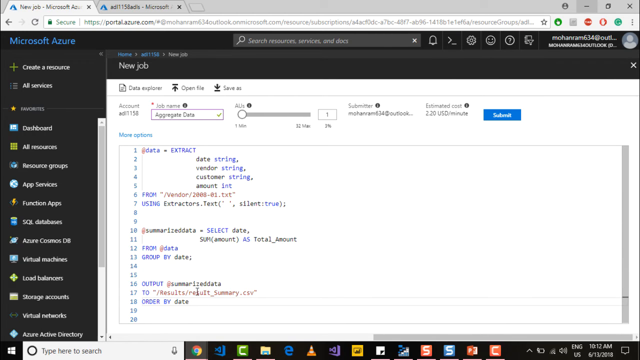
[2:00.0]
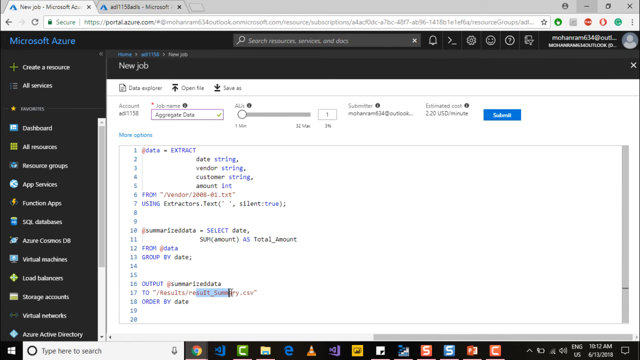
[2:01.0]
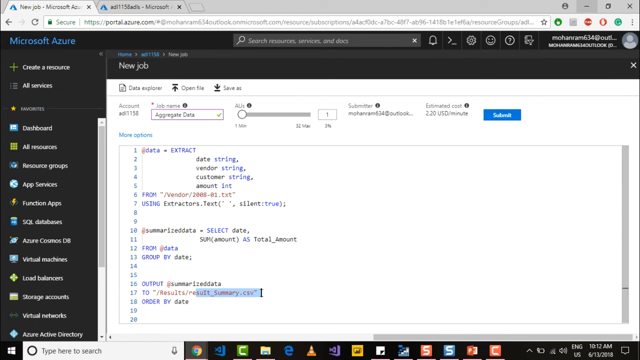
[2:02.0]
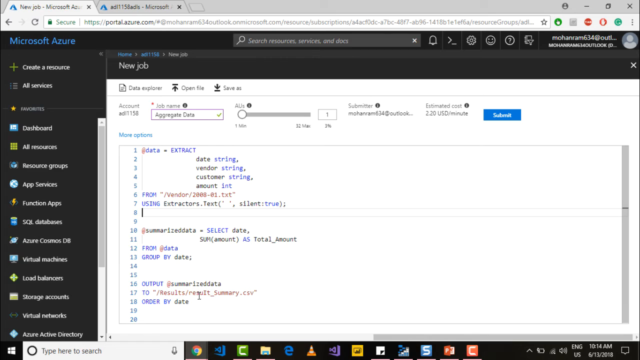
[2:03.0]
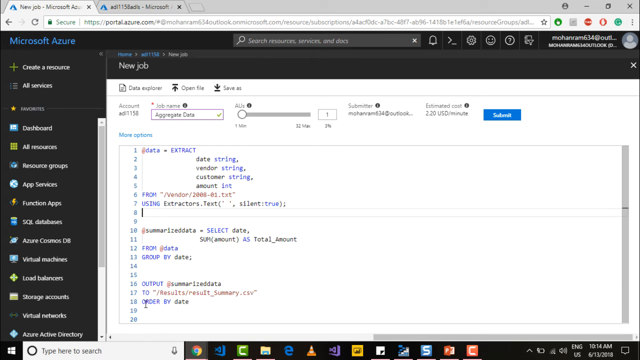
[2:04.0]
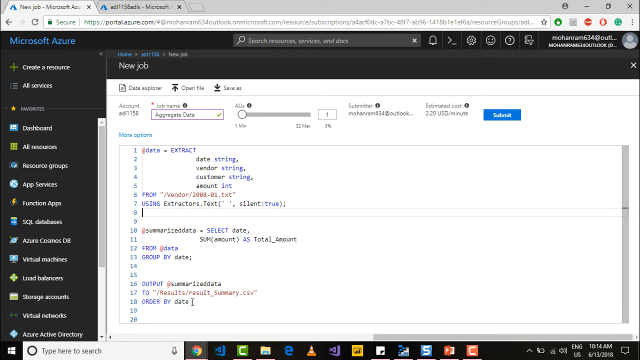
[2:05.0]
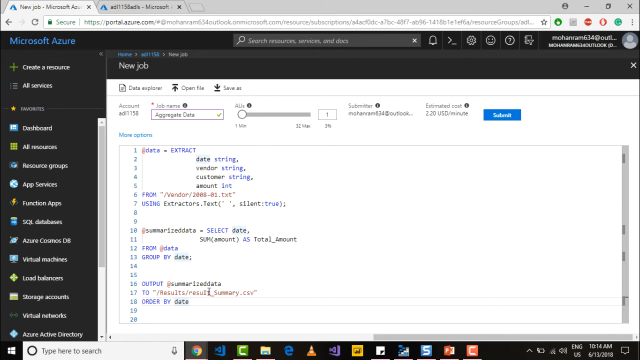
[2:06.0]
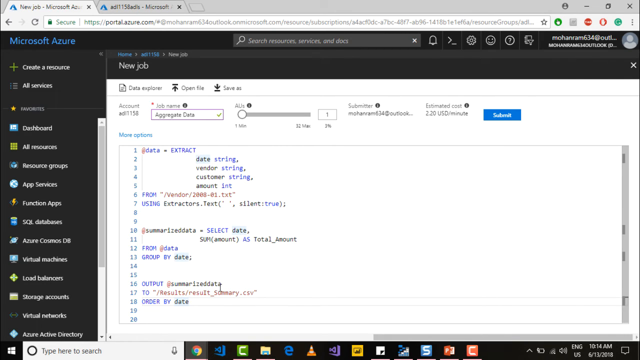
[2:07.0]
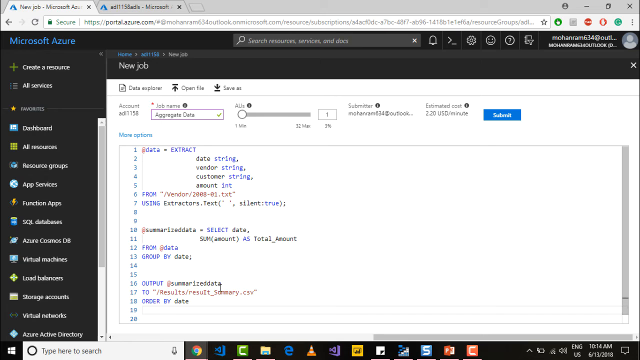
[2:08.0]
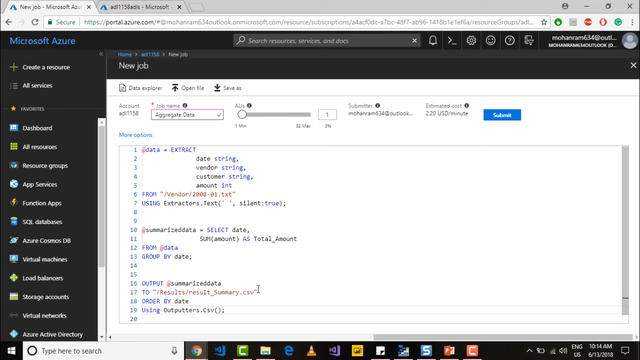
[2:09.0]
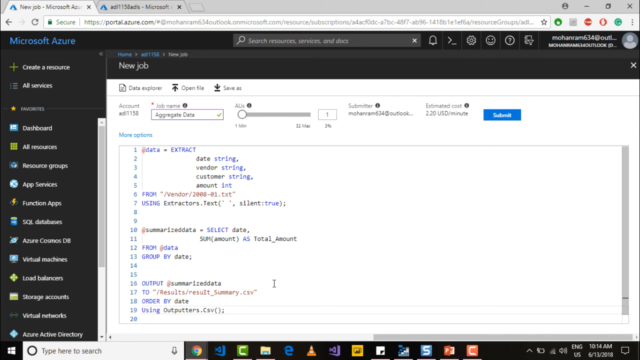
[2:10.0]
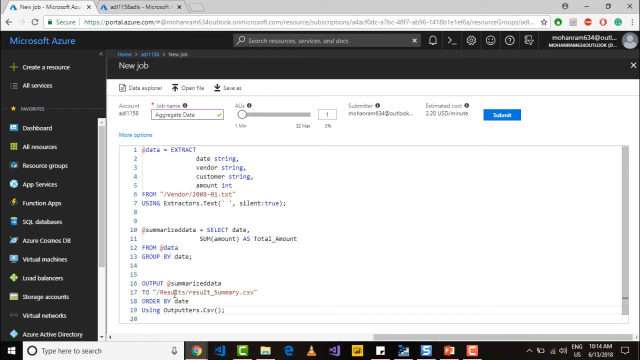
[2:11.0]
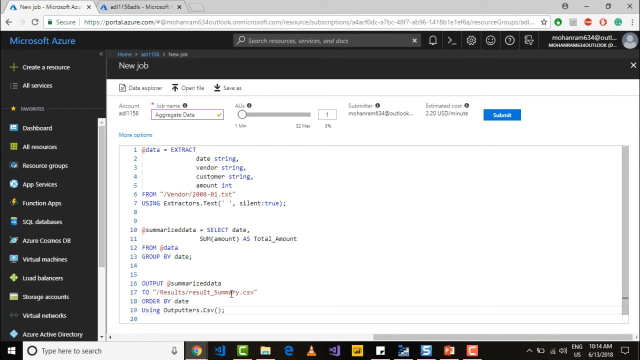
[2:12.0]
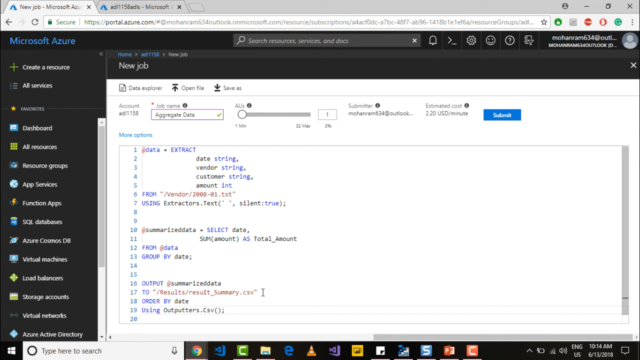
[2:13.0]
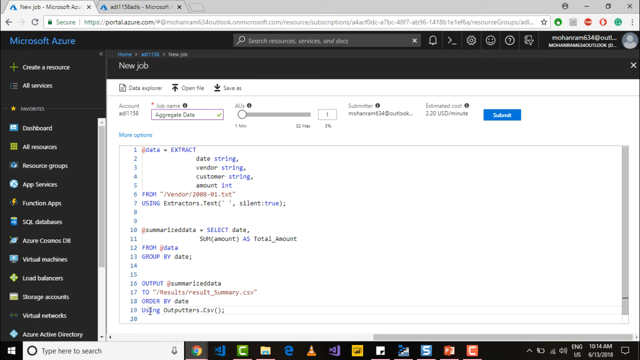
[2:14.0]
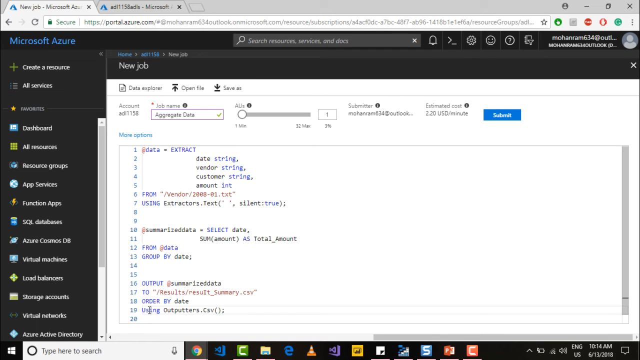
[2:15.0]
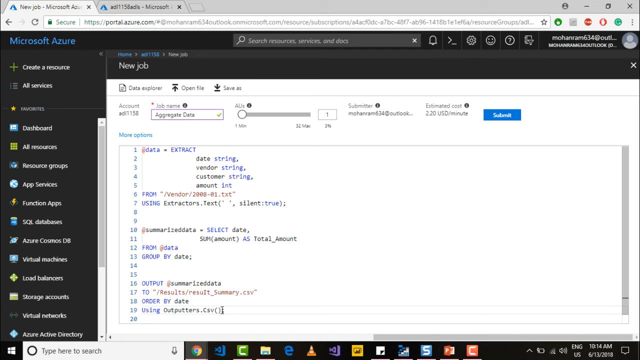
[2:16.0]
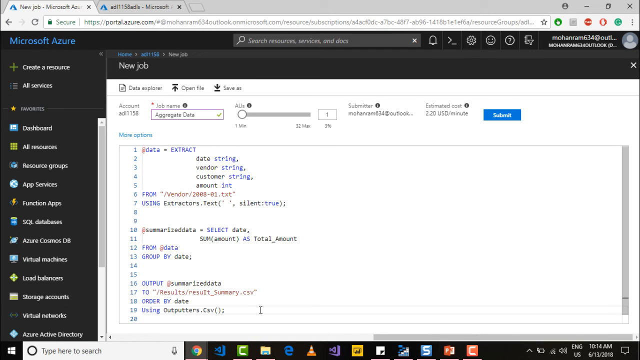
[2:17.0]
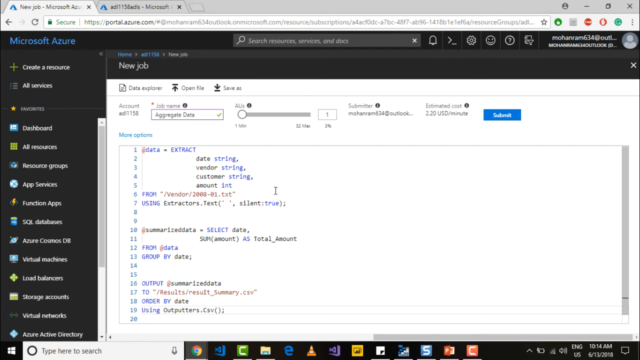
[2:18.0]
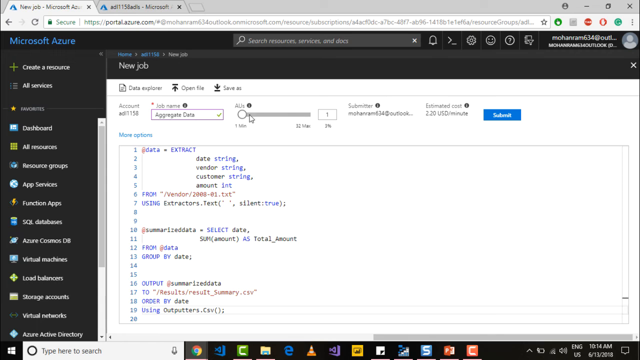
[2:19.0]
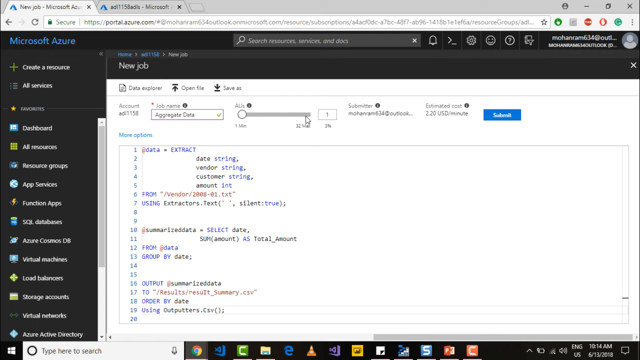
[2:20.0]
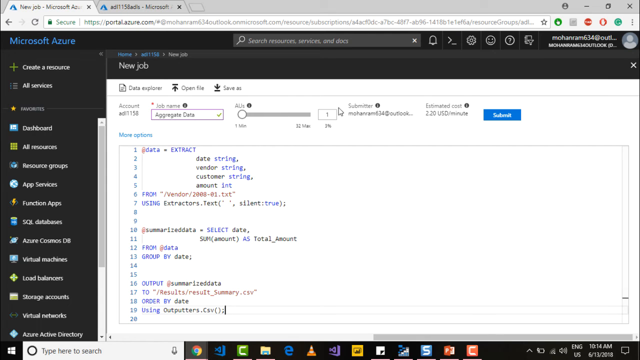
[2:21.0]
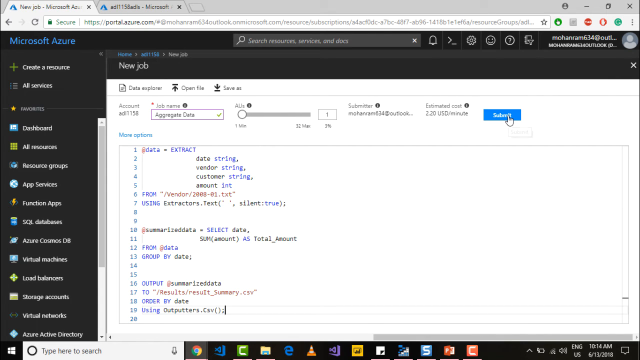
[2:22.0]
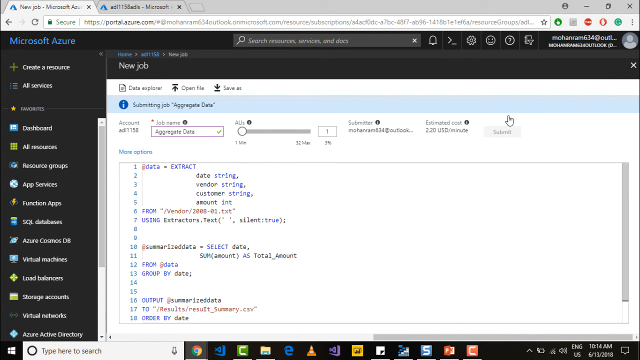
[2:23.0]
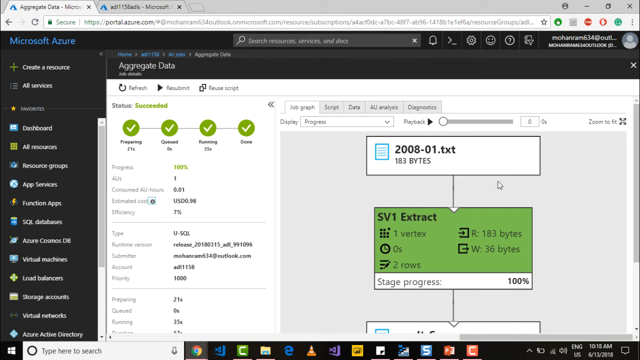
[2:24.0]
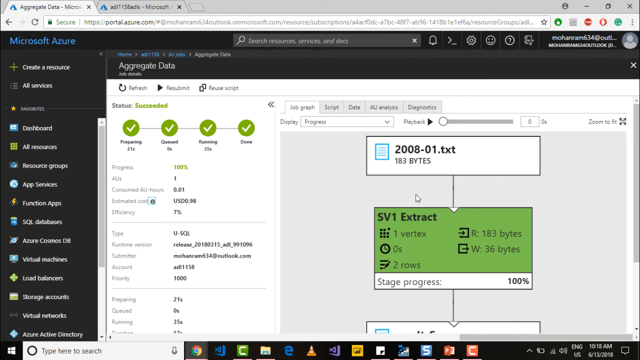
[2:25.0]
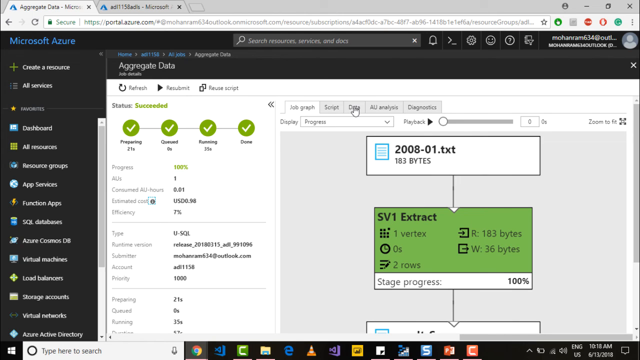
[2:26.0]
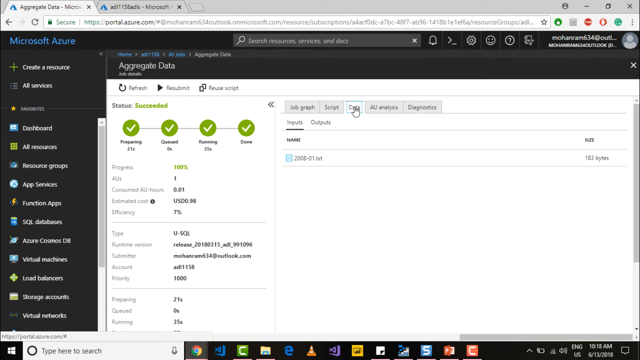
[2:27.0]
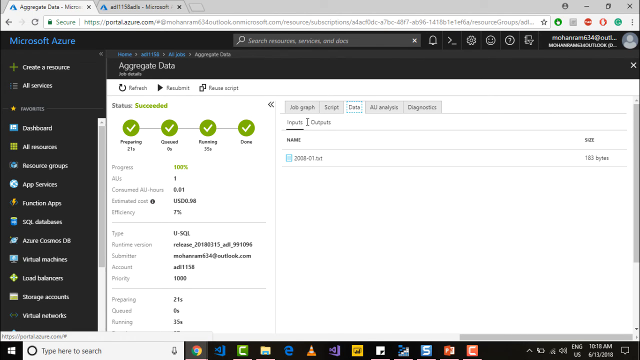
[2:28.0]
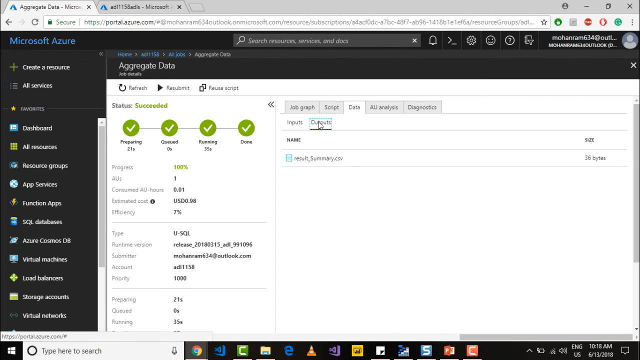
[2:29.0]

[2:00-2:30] A close-up of a computer monitor shows two tabs. The open one in the upper left is the new job, and the other, not open, reads "ADJ1158 ADIS Microsoft." In the upper right corner below the address bar is the profile user, too blurry to make out the name. The image of the screen is poor and fuzzy, and many words are difficult to make out. The white page shows lines 1 through 20, and the mouse moves from line 16 and jumps to line 18. Suddenly line 19 appears, reading "using outputters." The blue submit button in the upper right corner is clicked, leading to the next screen.